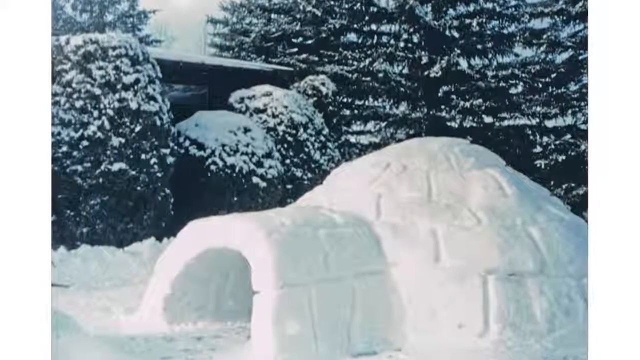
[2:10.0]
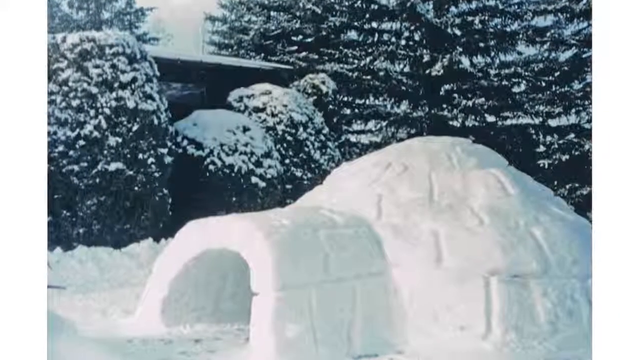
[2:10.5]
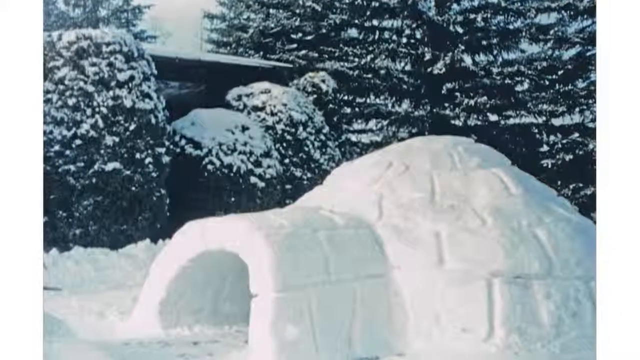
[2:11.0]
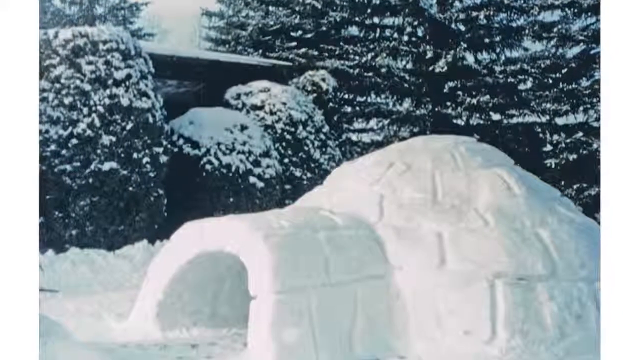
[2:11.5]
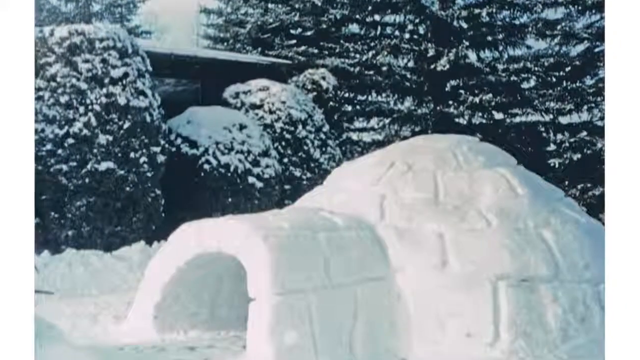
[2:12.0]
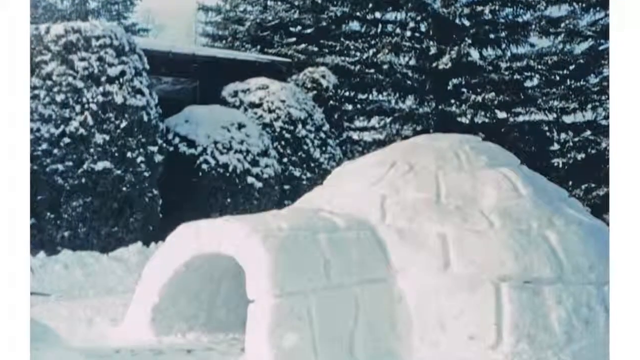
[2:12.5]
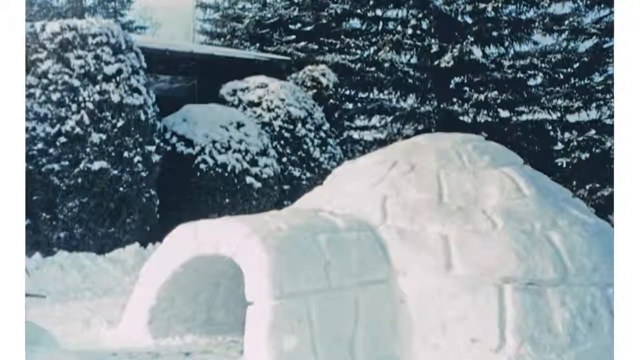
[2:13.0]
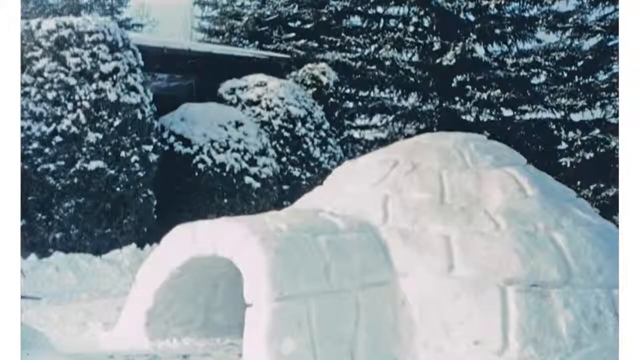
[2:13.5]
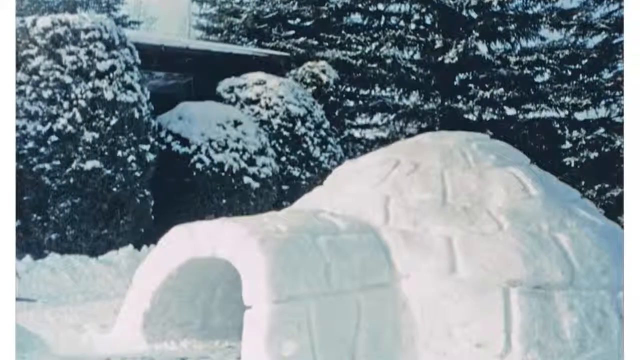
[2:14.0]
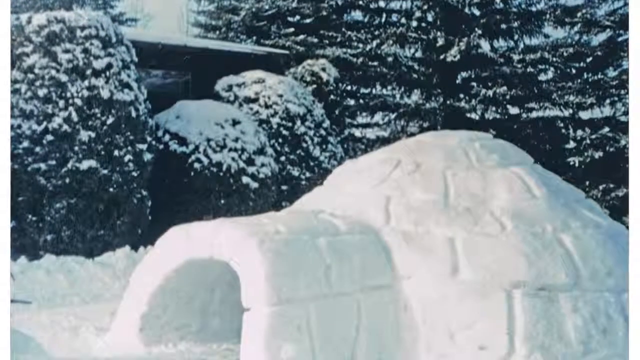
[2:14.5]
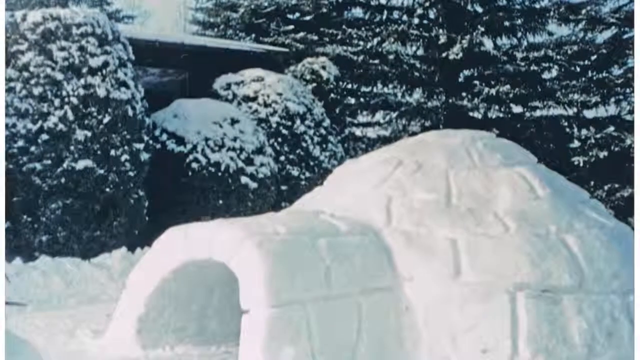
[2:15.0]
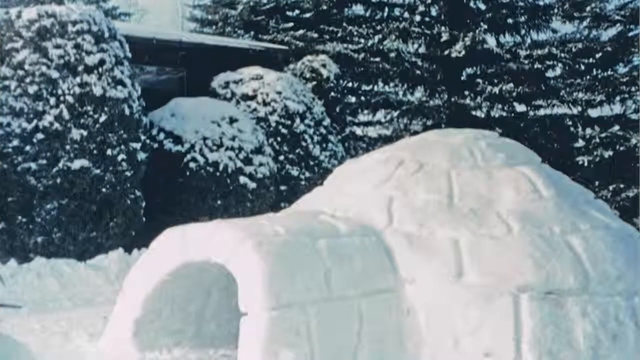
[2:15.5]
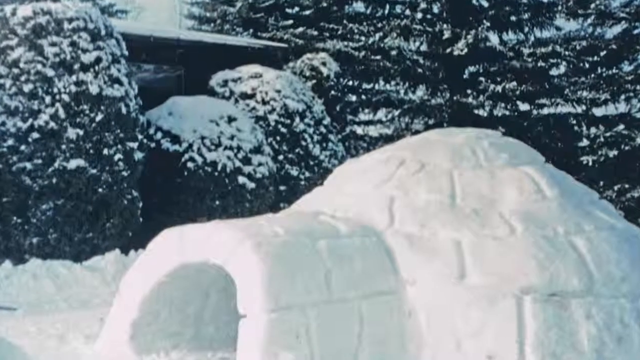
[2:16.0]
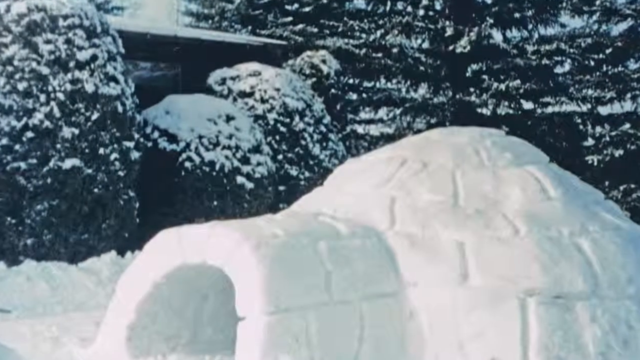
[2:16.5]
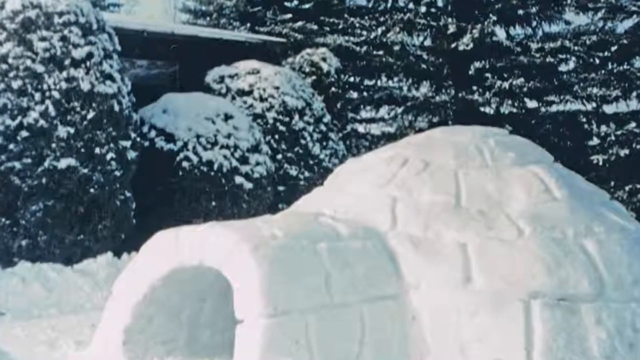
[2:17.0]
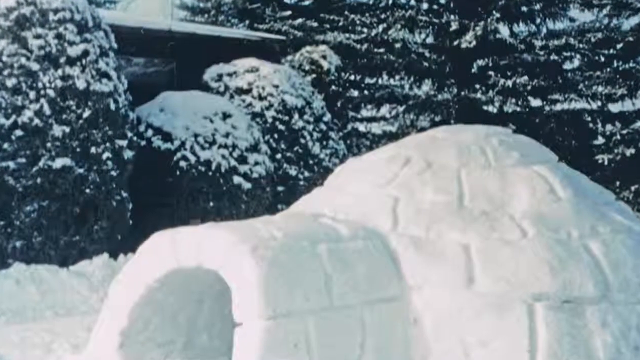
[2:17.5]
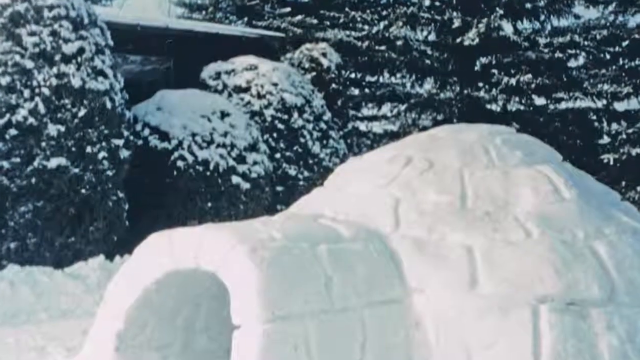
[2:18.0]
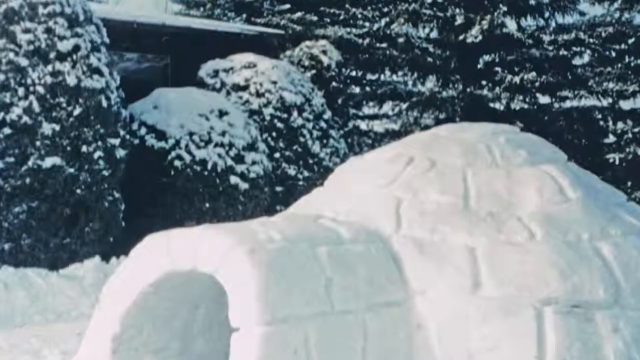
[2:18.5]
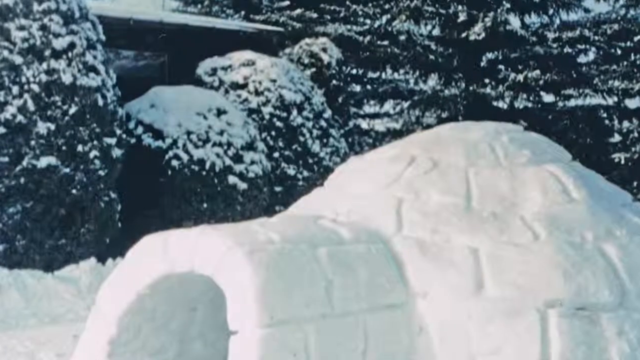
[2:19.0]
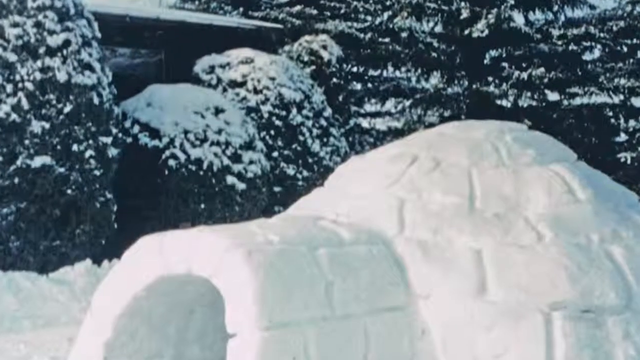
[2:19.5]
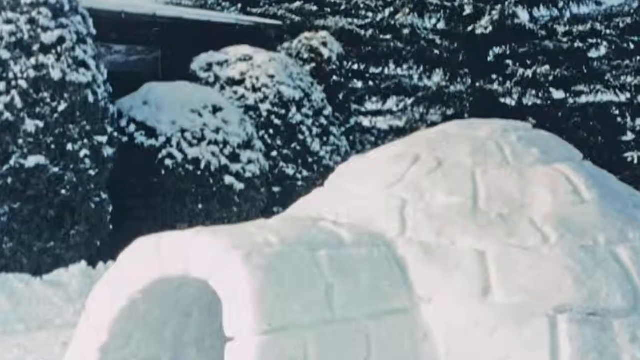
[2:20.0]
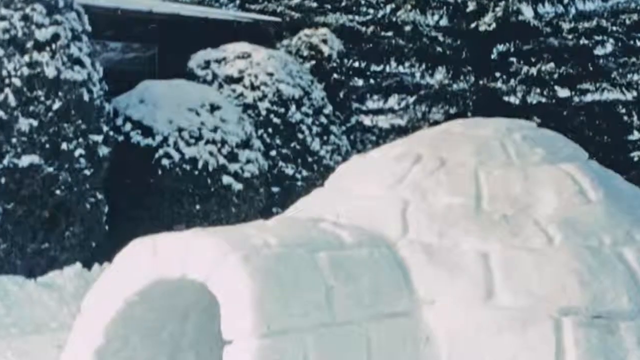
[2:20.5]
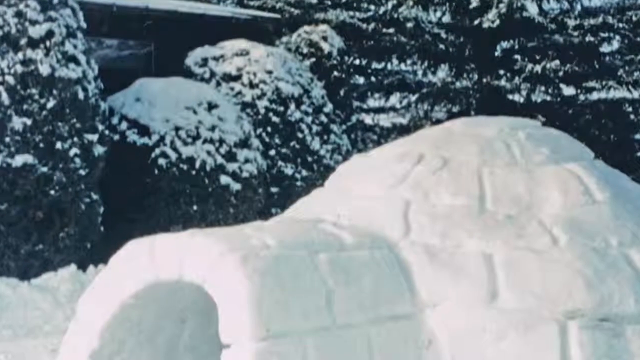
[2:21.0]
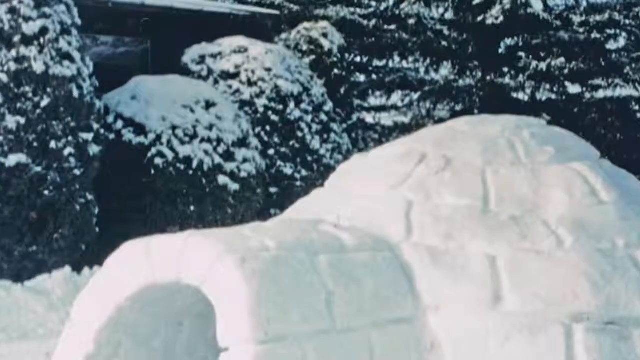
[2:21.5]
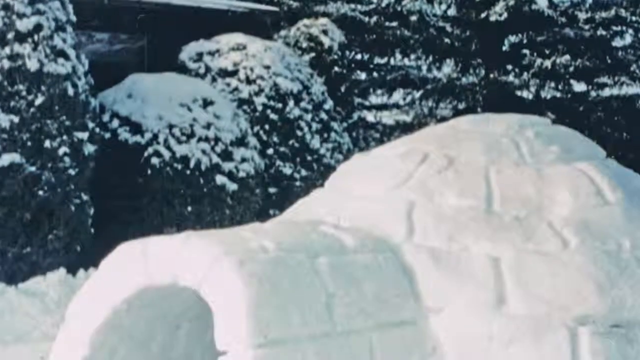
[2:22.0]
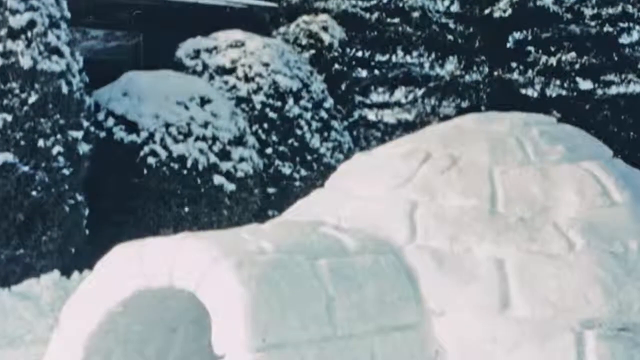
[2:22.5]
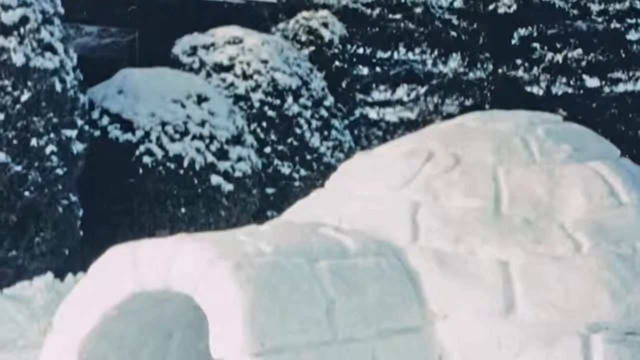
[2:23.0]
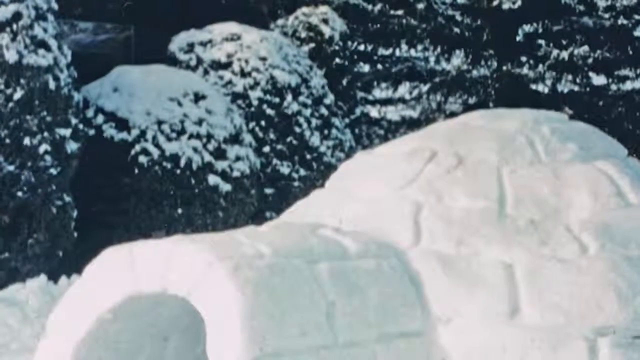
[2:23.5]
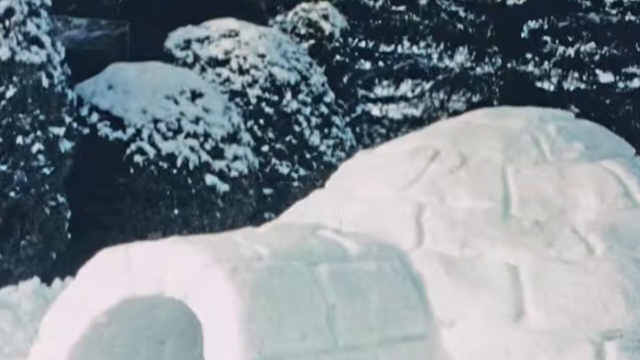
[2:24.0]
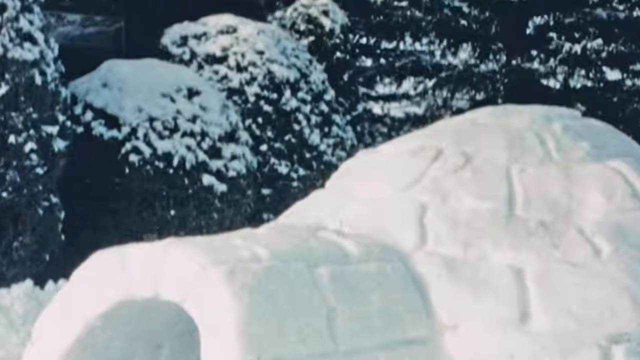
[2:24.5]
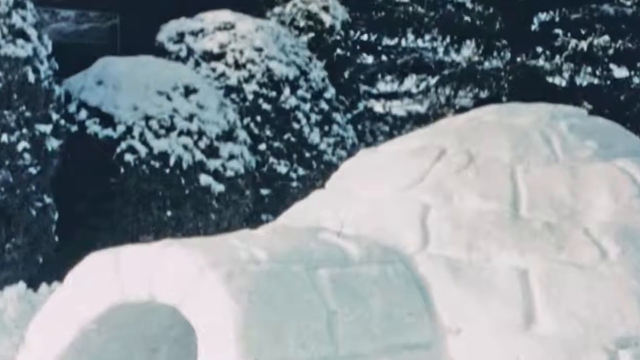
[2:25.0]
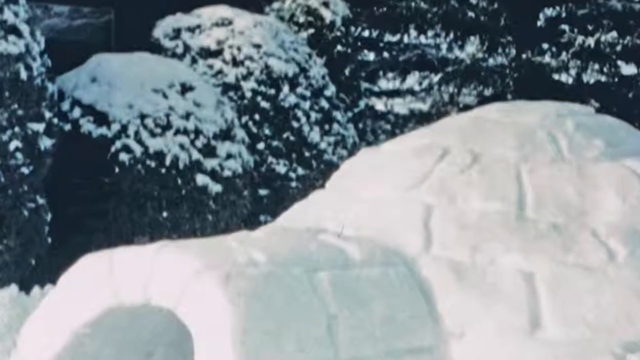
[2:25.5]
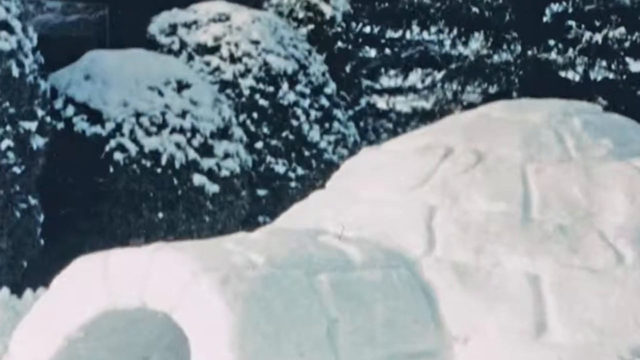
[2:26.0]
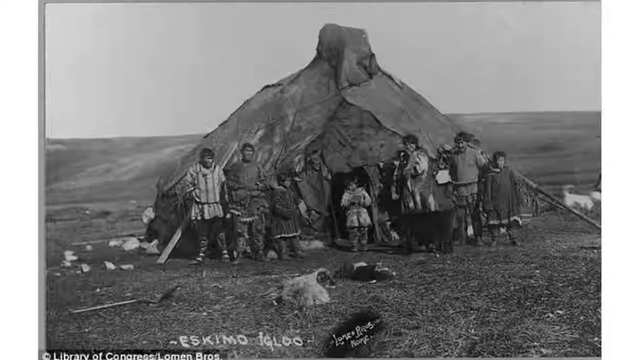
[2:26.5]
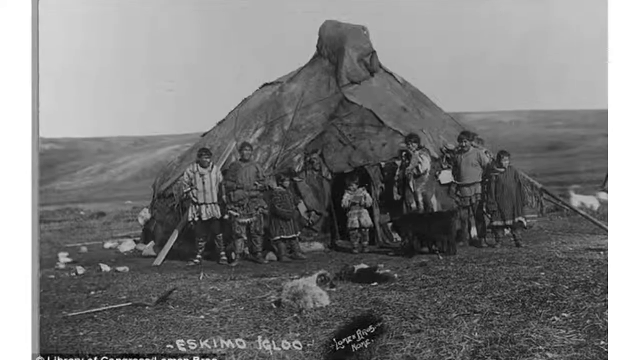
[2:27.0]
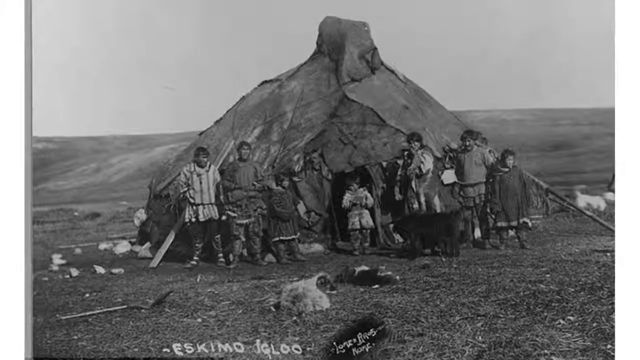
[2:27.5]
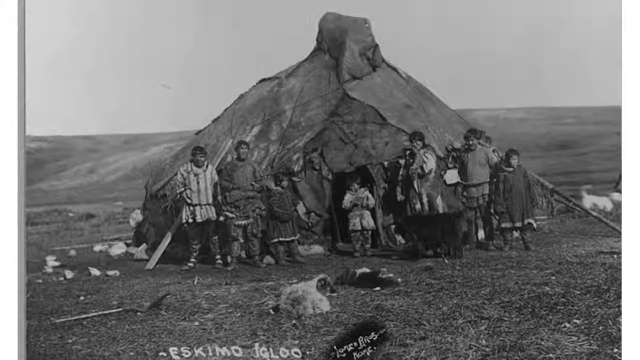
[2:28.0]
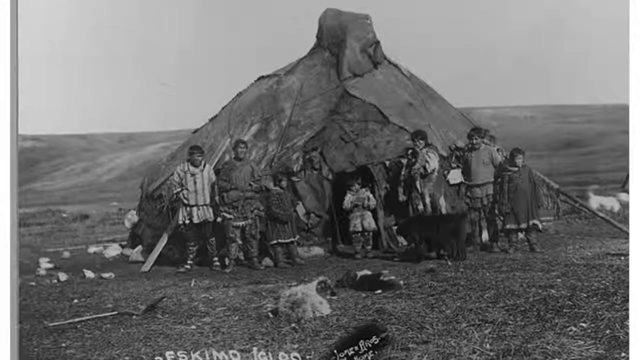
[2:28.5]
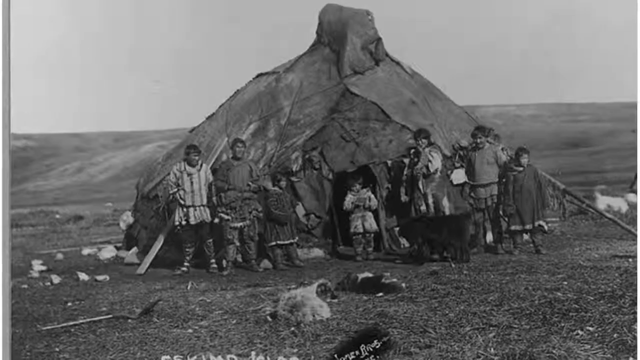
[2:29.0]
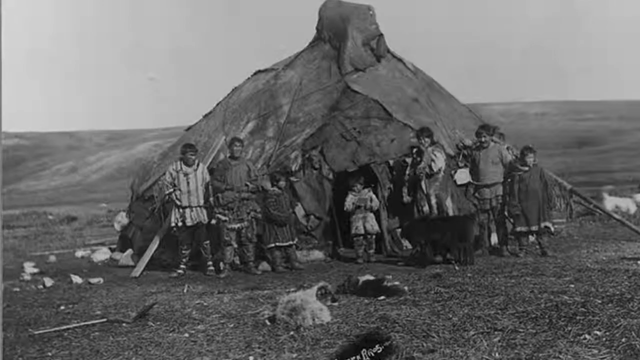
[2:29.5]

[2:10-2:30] Houses made of snow are shown, shelters that look strong inside and out.